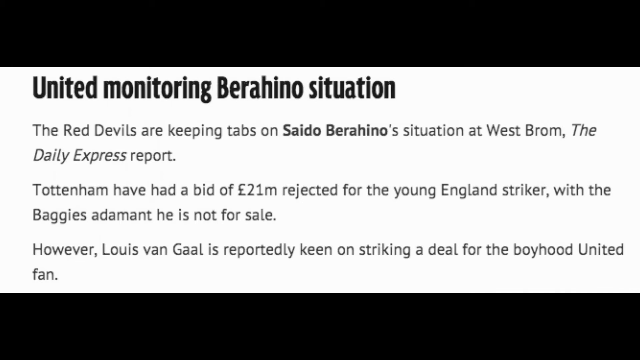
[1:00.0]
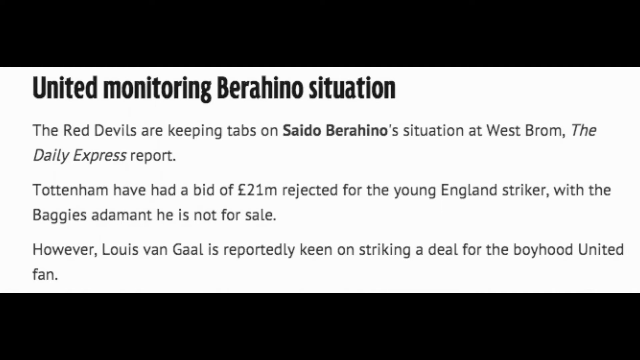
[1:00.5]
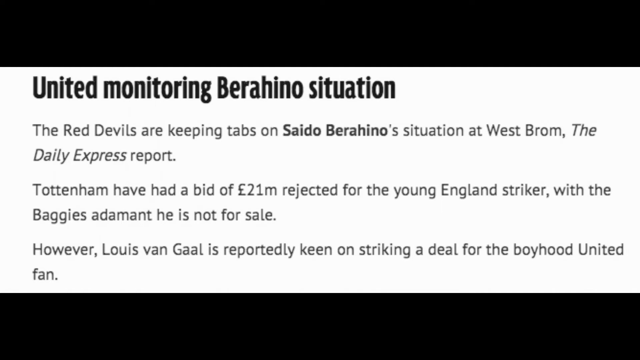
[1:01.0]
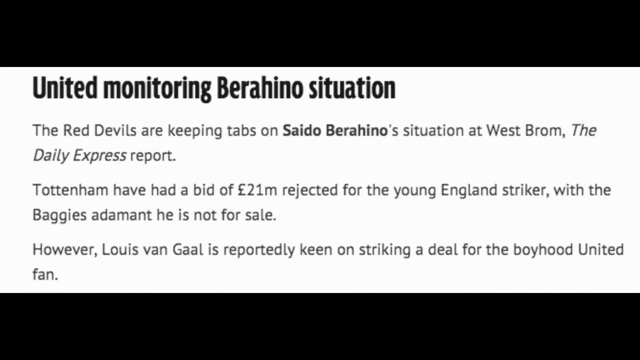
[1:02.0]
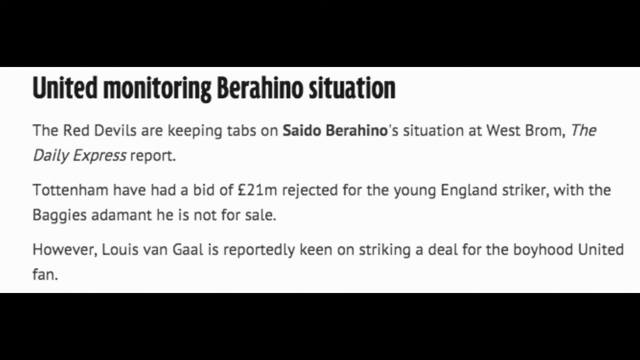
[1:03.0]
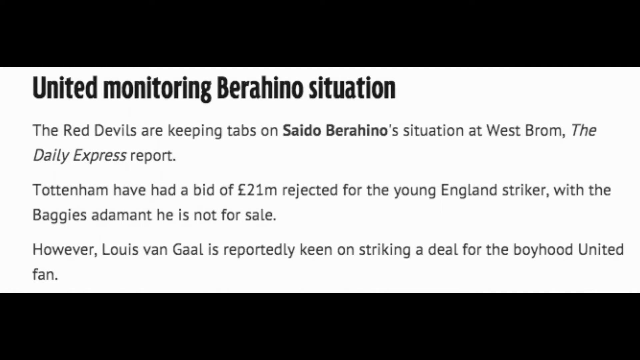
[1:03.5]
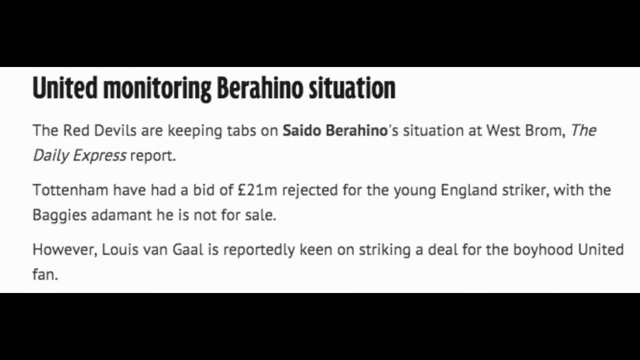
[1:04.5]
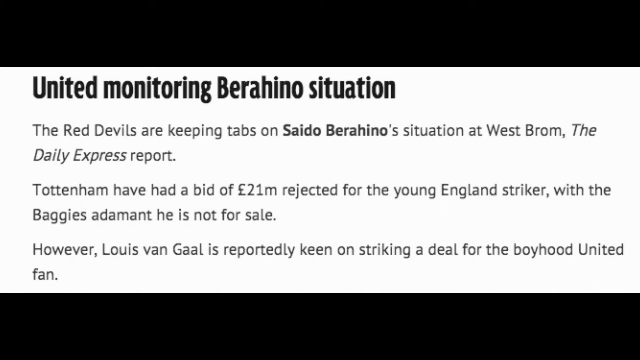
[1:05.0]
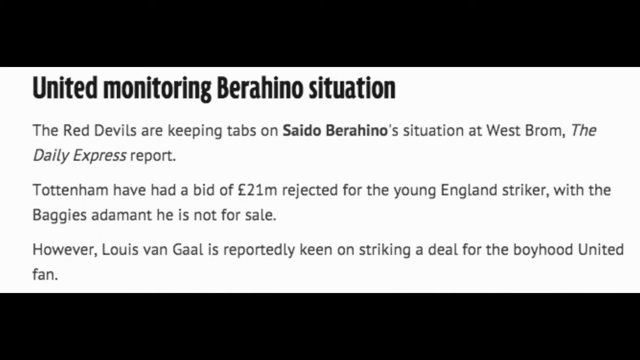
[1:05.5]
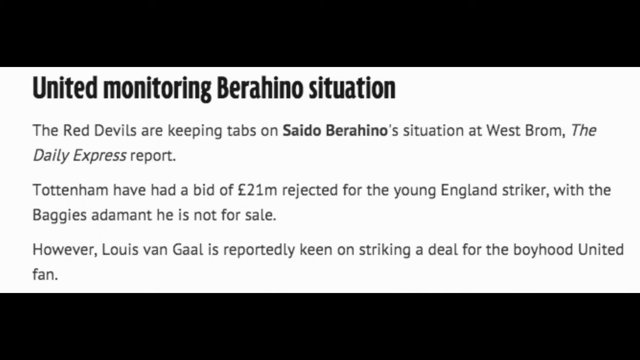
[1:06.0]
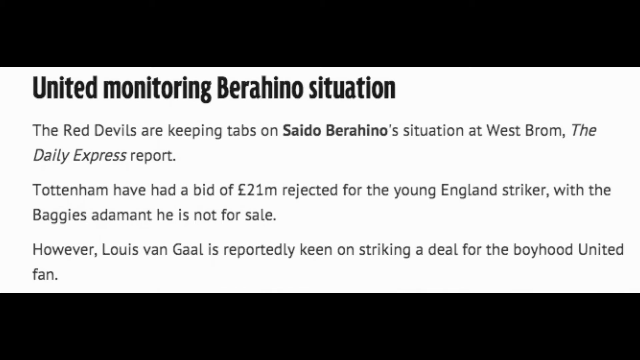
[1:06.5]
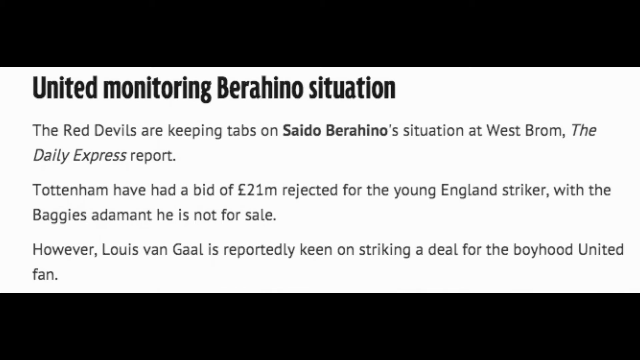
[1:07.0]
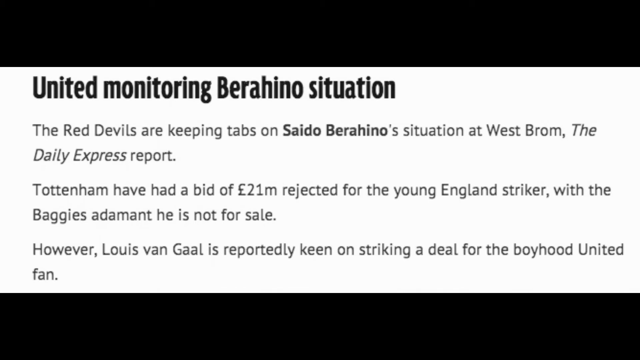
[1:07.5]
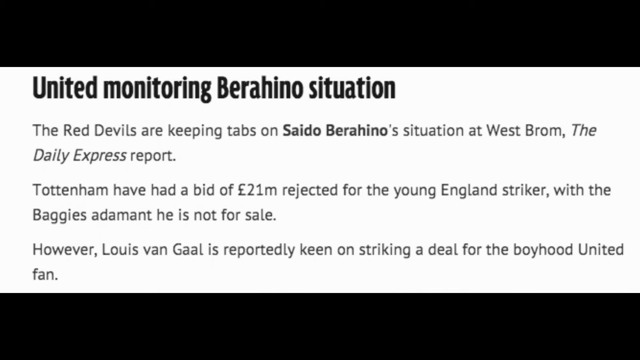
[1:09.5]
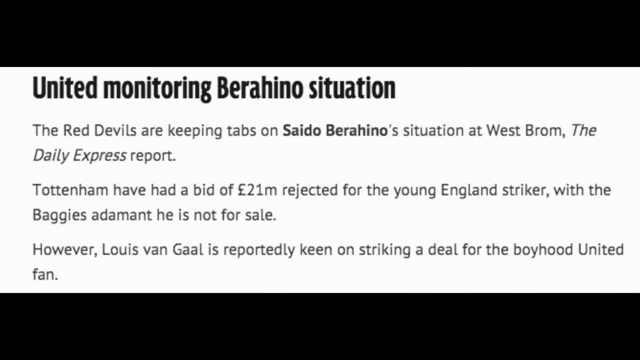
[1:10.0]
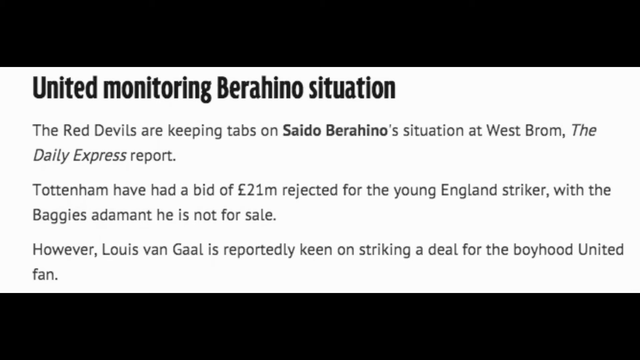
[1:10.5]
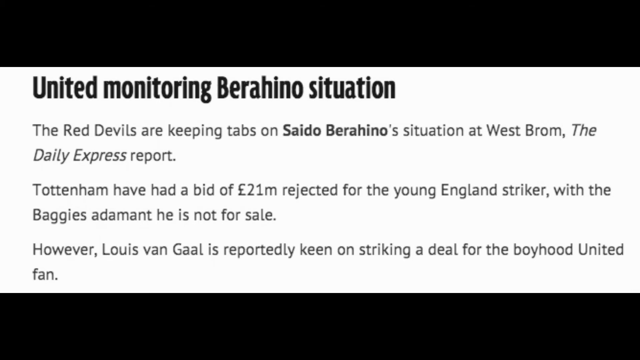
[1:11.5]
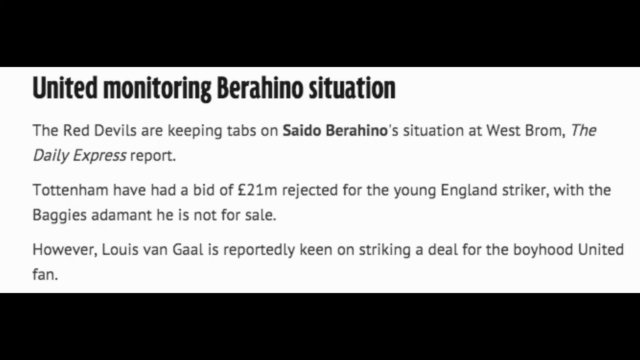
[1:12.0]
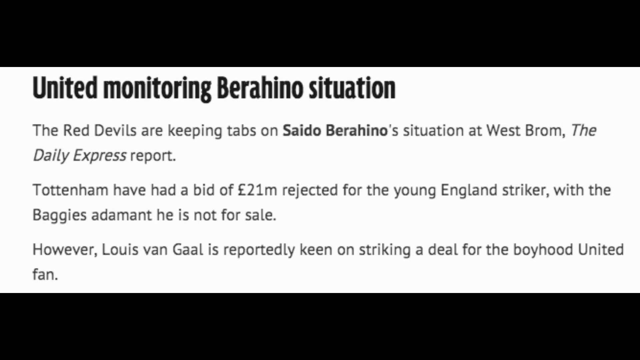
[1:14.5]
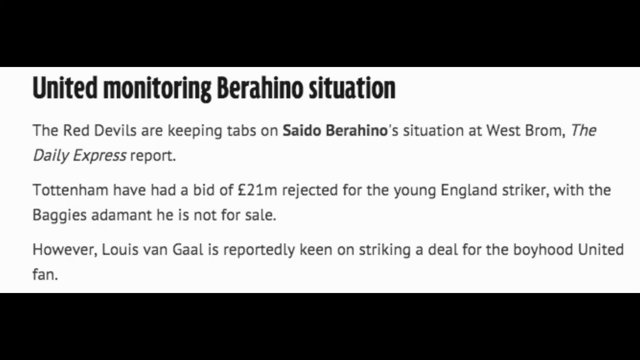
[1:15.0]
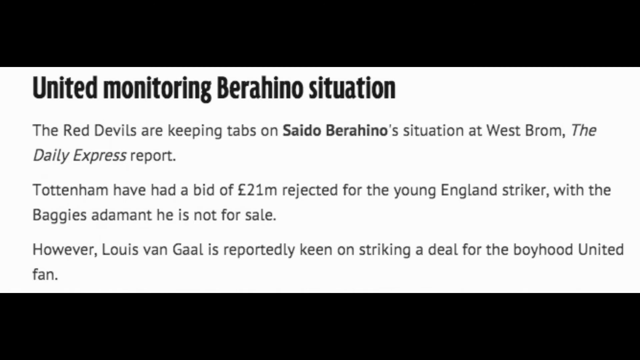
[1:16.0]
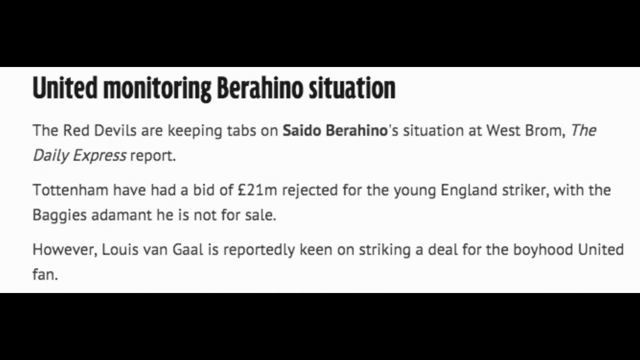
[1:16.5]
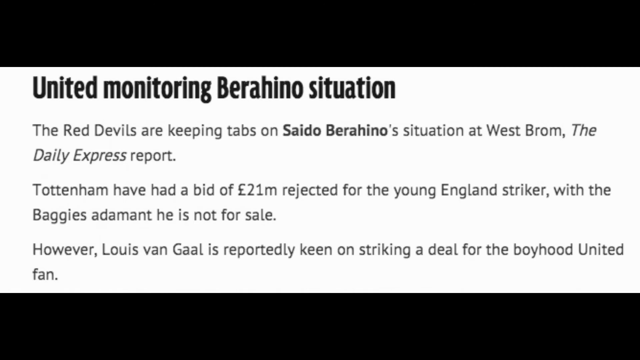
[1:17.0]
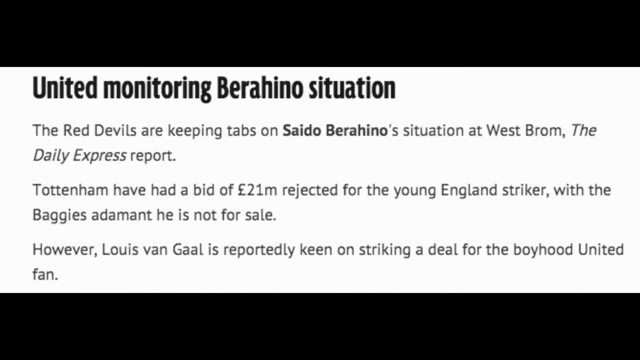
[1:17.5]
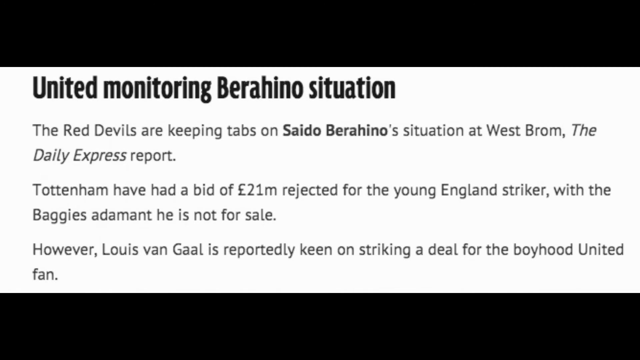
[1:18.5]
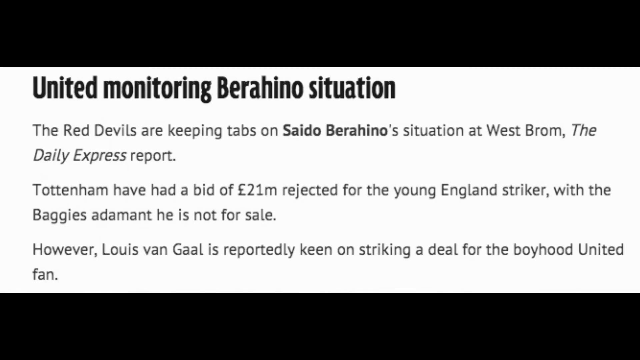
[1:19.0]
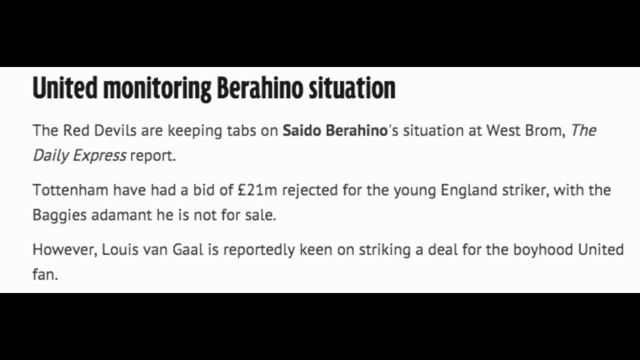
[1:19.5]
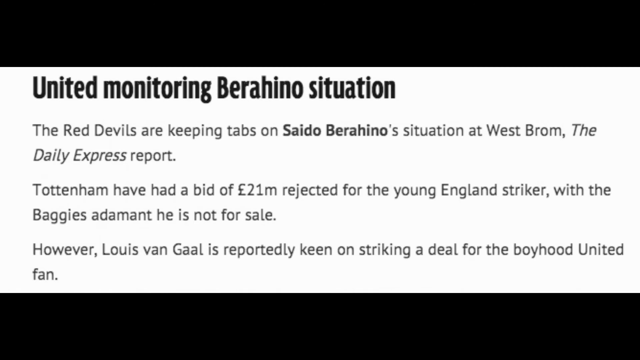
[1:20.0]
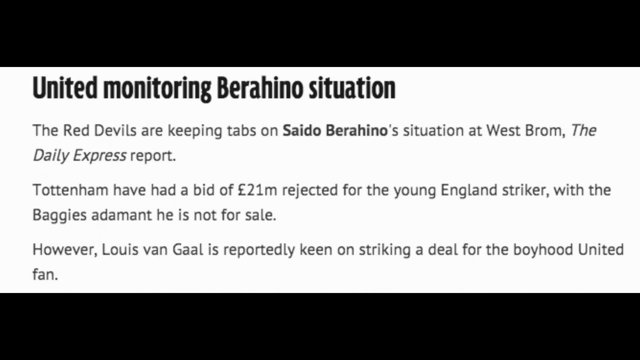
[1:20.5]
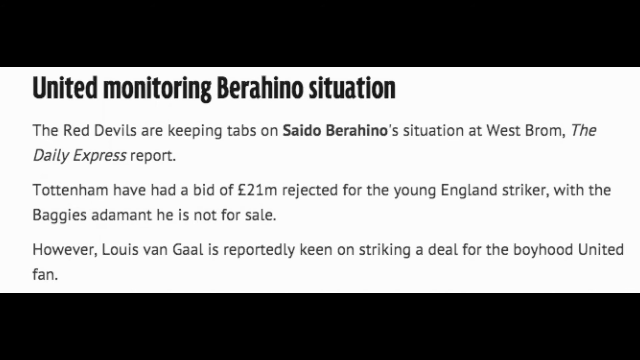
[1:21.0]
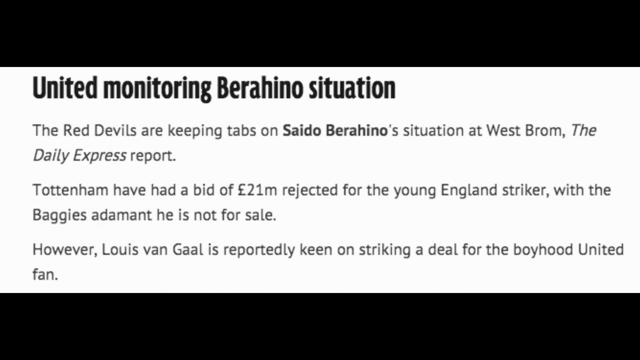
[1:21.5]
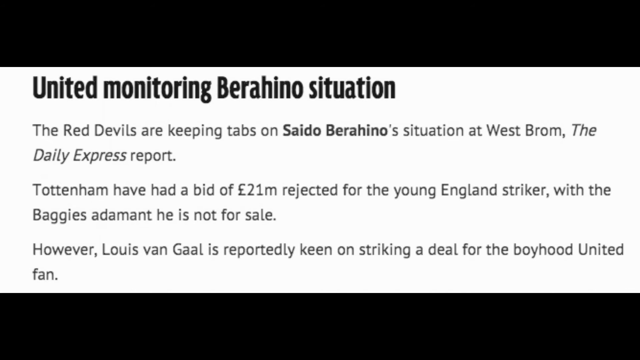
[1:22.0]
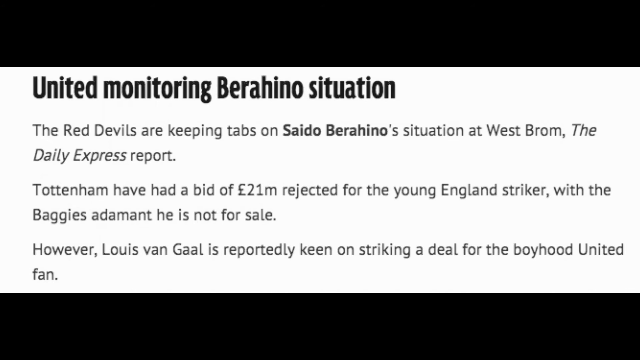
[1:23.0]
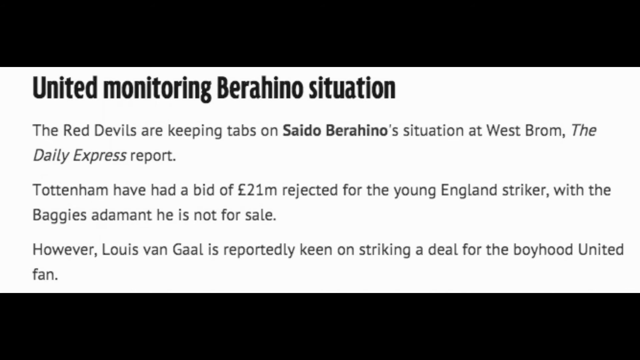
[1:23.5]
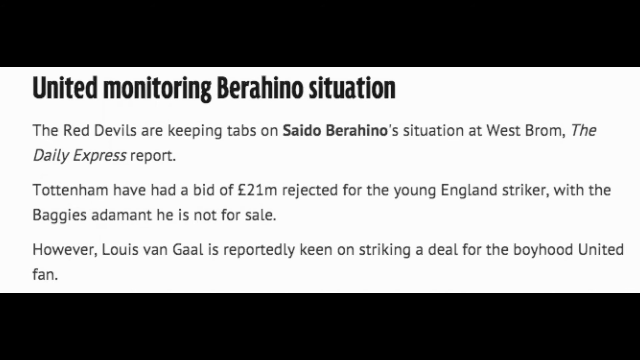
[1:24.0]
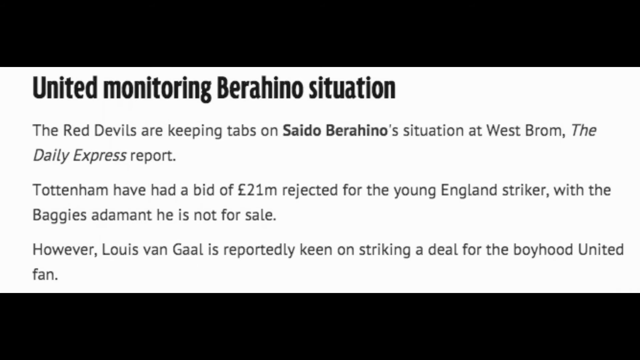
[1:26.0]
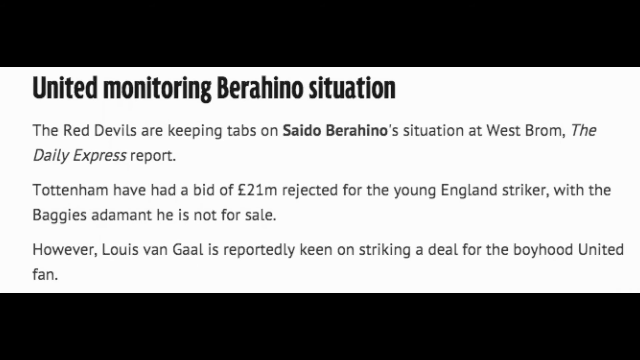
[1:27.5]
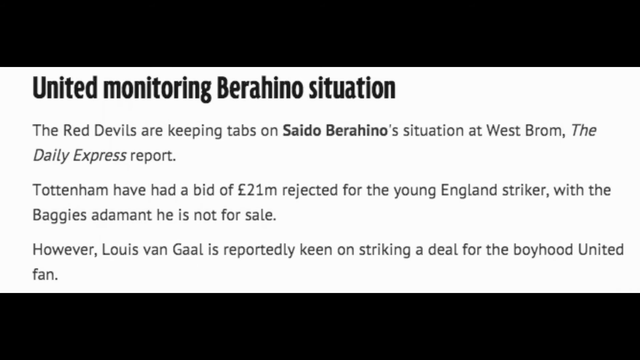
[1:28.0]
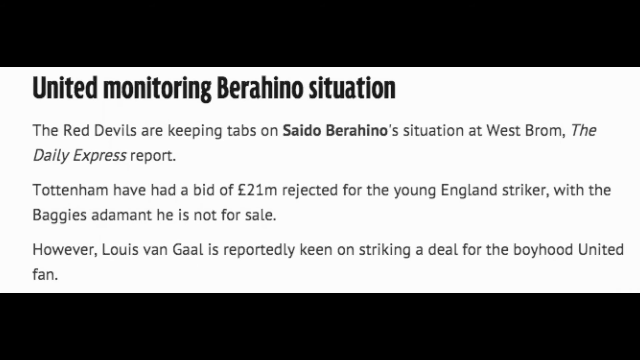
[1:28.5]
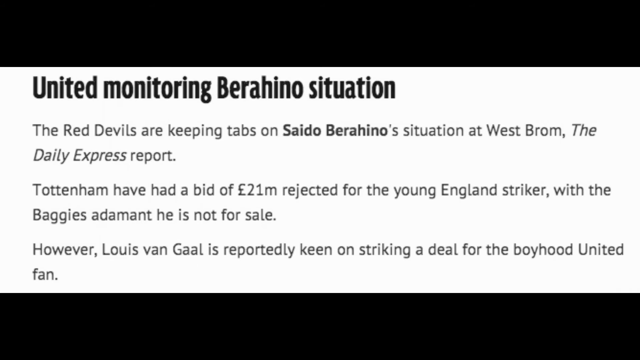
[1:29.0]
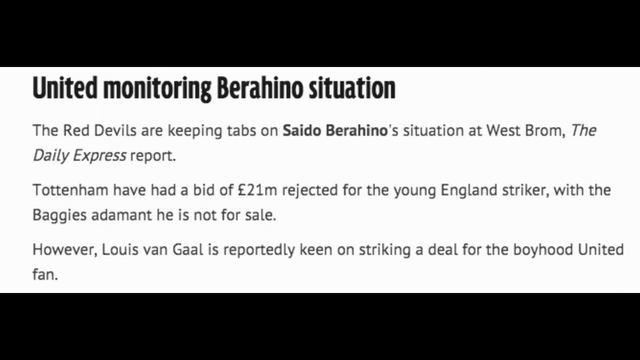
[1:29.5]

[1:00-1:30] Black text appears on a white background with black bars at the top and bottom of the screen, the text segmented and positioned in the middle. At the top left, a title reads "United Monitoring Barrichino Situation." Beneath it are three sentences separated by spaces. The first reads "The Red Devils are keeping tabs on Saito Barrichino's situation at West Brom, the Daily Express report," with "Saito Barrichino" in bold. The second reads "Tote and Tom have had a bid of 21 million pounds rejected for the young England striker. With the baggies adamant he is not for sale." The third reads "However, Louis van Gaal is reportedly keen on striking a deal for the Boyhood United fan." Nothing else is on screen. The text does not appear to be a large article; it may be a headline or teaser for an article, like one shown on the front page of a website or a magazine.